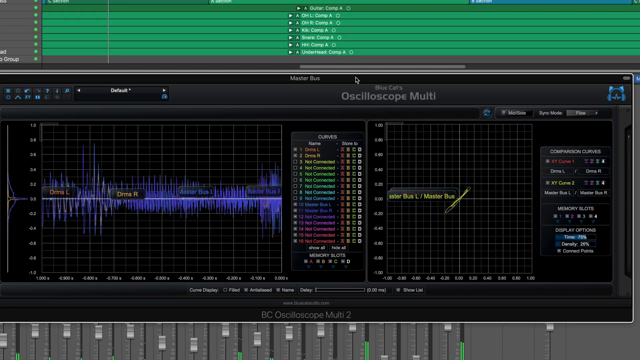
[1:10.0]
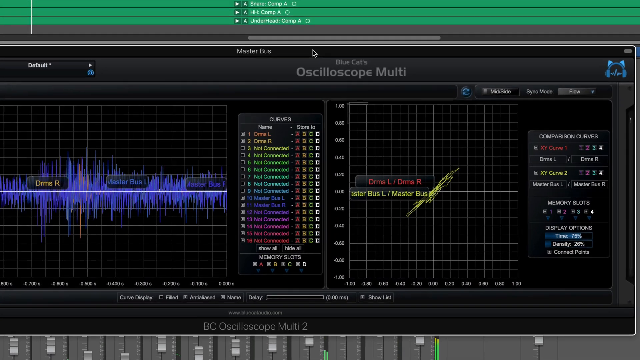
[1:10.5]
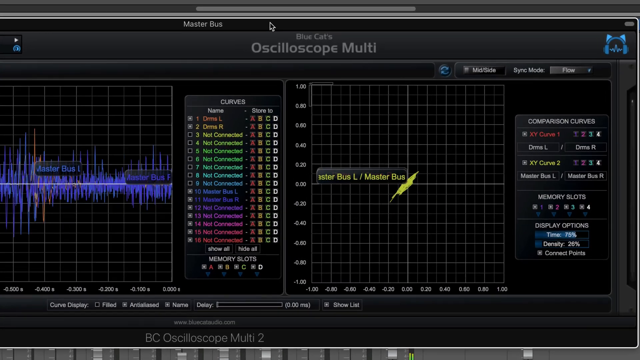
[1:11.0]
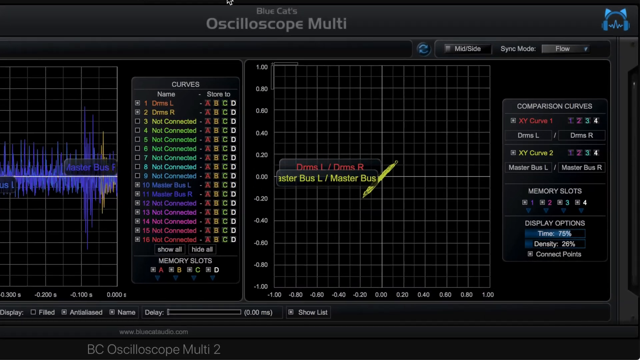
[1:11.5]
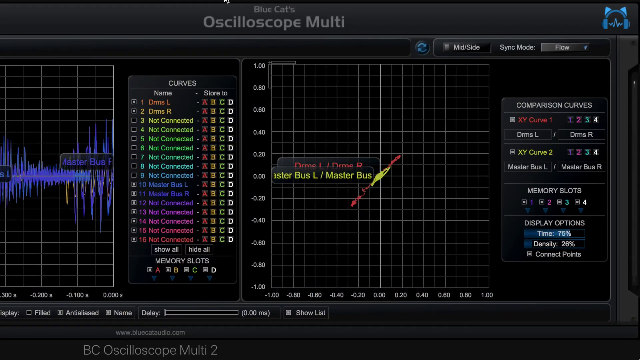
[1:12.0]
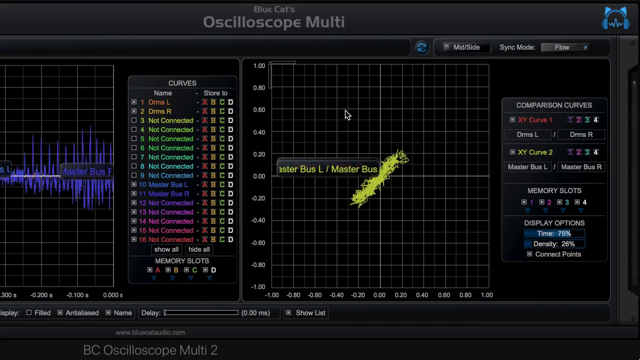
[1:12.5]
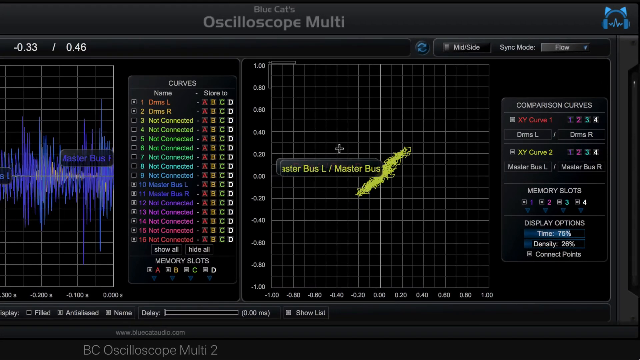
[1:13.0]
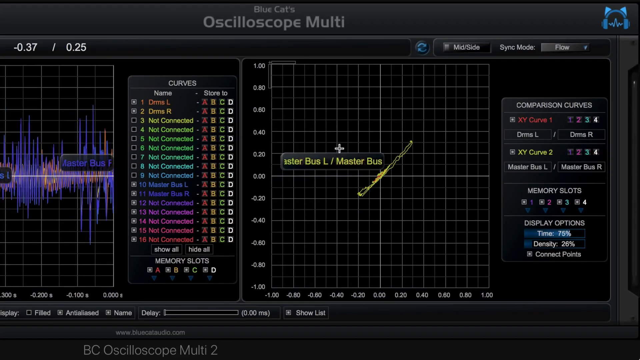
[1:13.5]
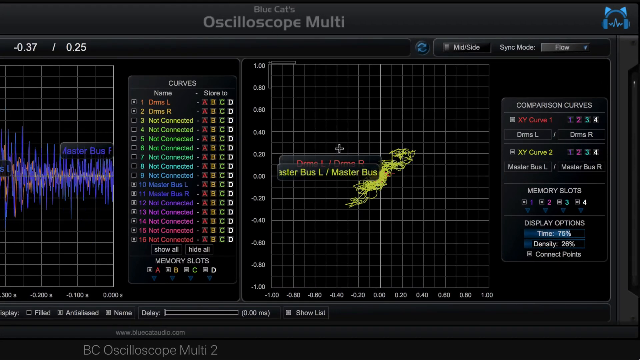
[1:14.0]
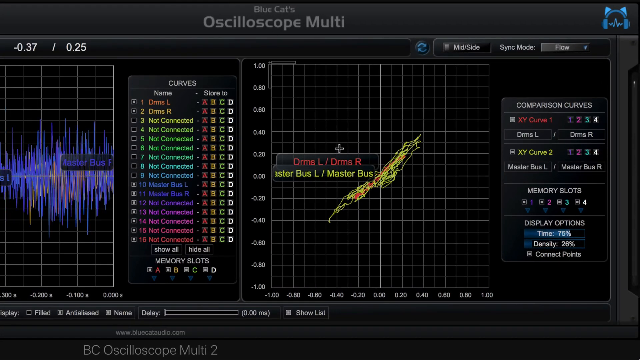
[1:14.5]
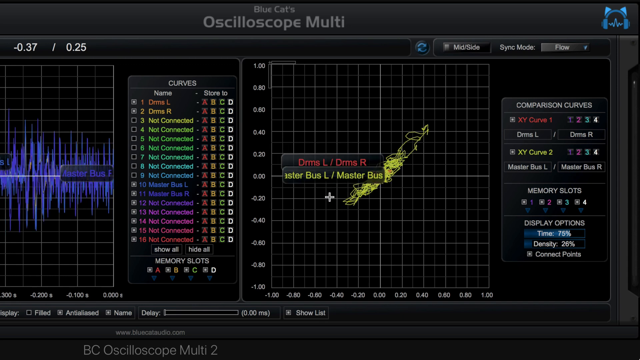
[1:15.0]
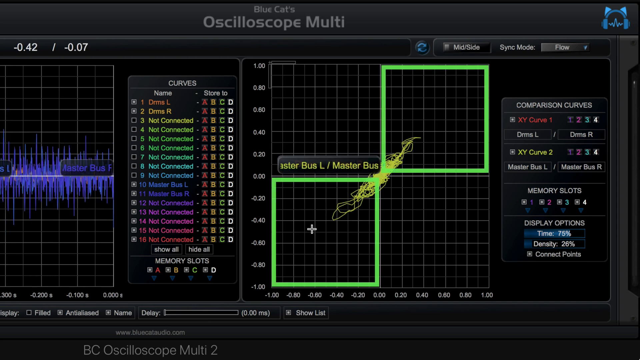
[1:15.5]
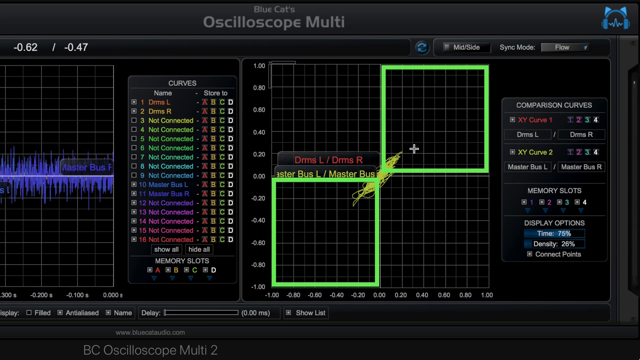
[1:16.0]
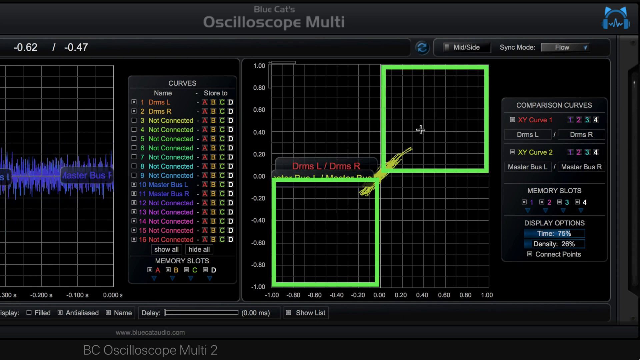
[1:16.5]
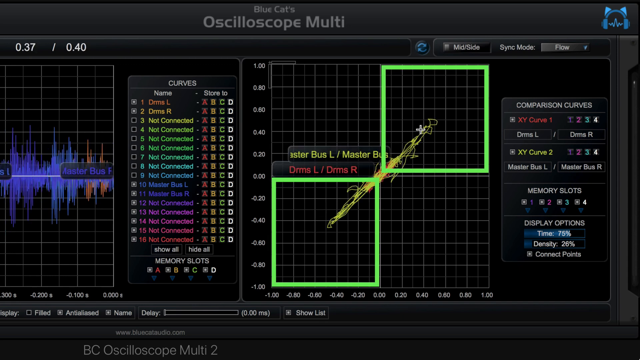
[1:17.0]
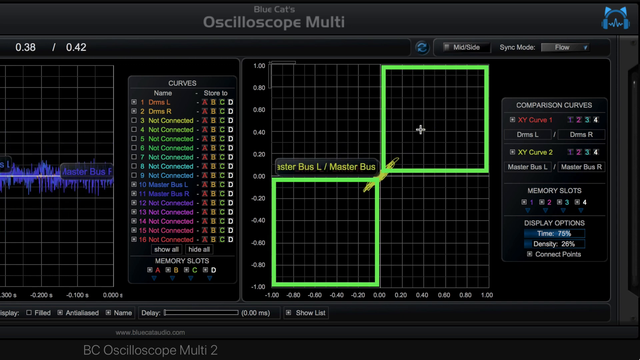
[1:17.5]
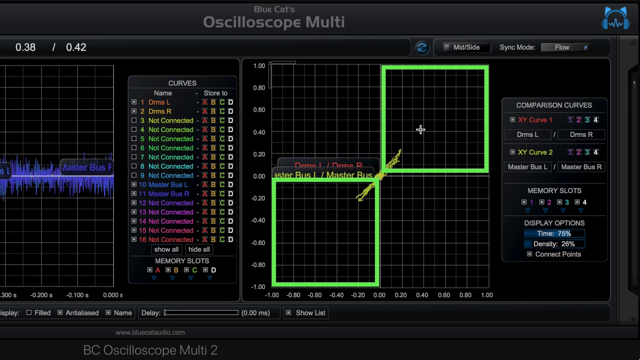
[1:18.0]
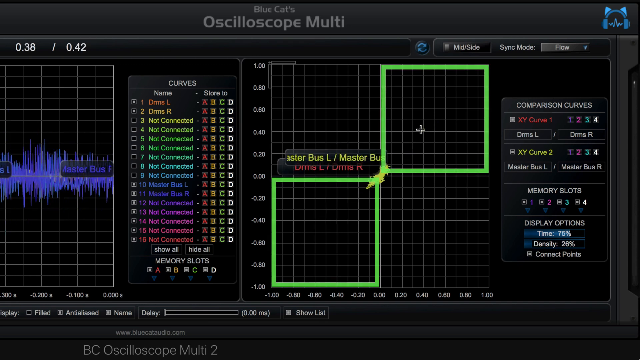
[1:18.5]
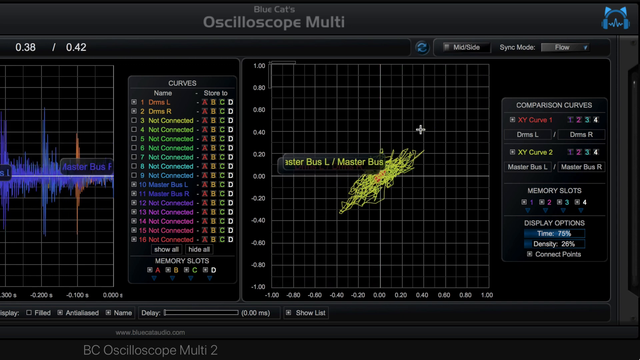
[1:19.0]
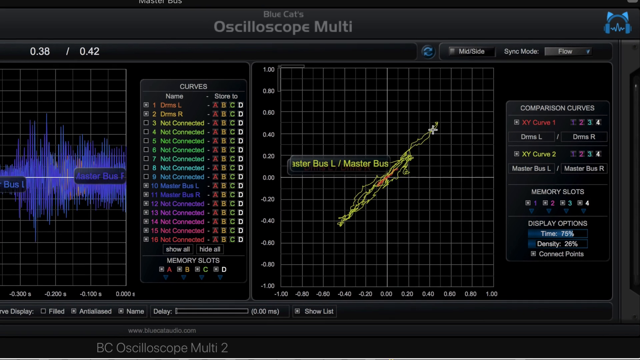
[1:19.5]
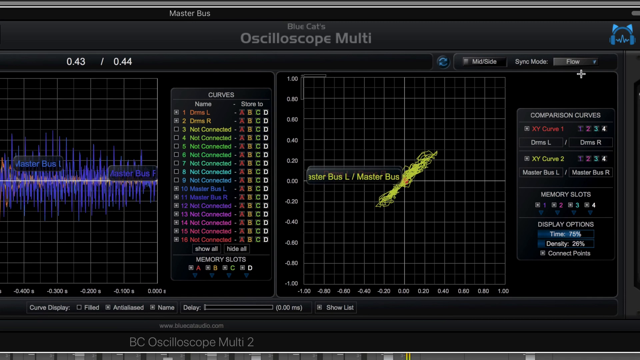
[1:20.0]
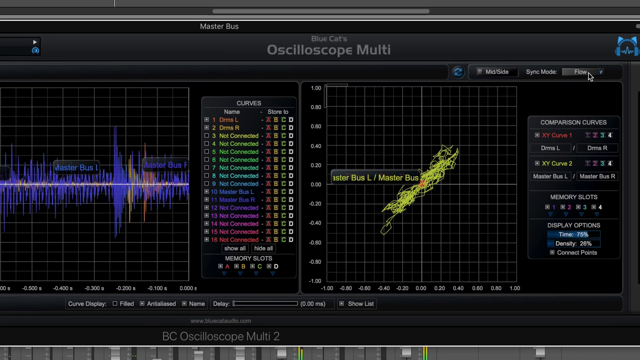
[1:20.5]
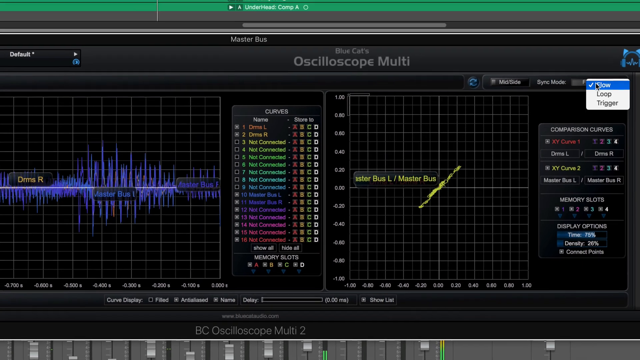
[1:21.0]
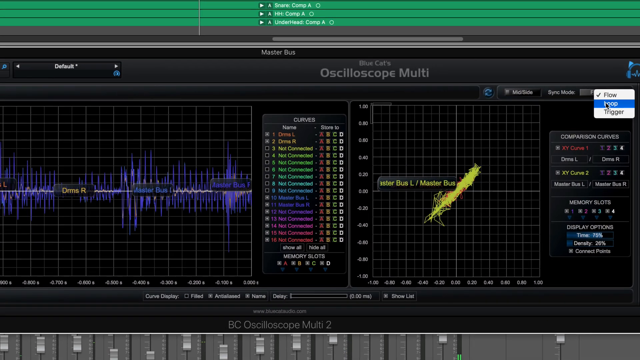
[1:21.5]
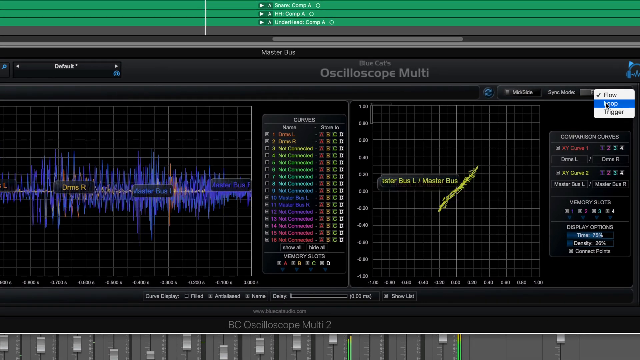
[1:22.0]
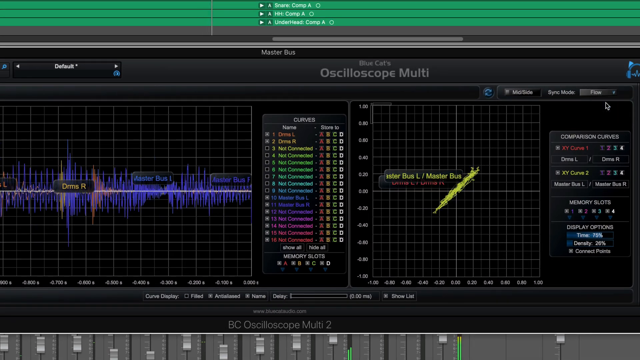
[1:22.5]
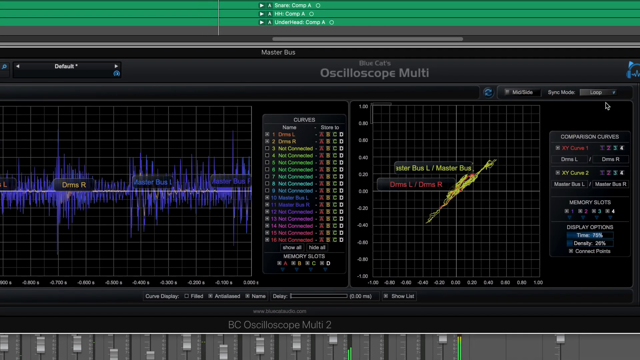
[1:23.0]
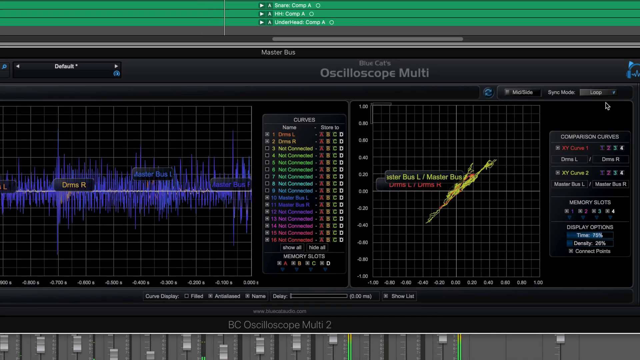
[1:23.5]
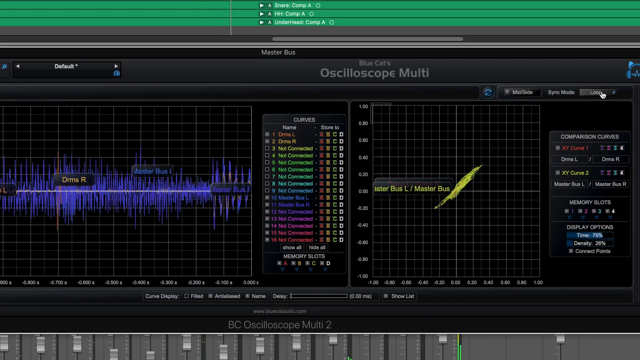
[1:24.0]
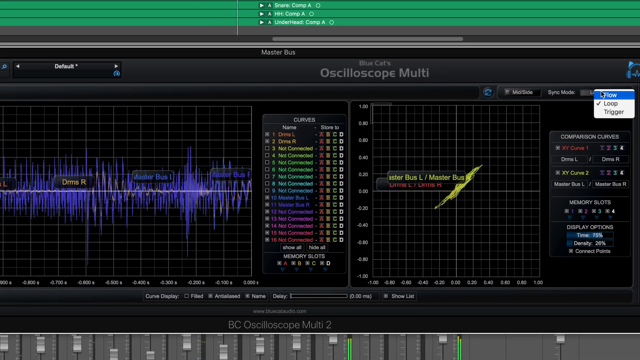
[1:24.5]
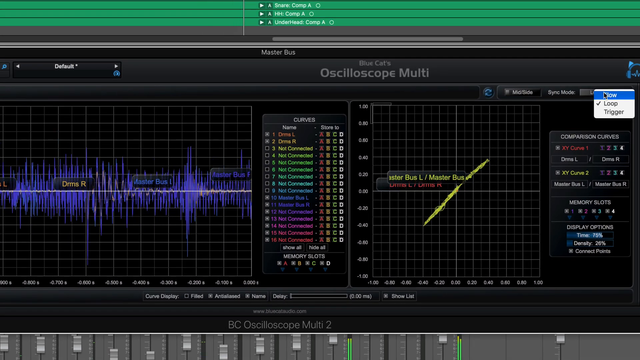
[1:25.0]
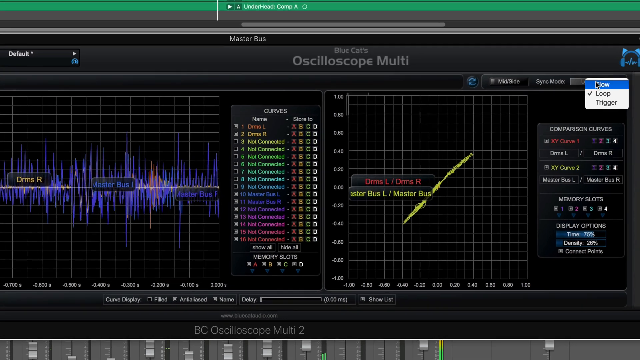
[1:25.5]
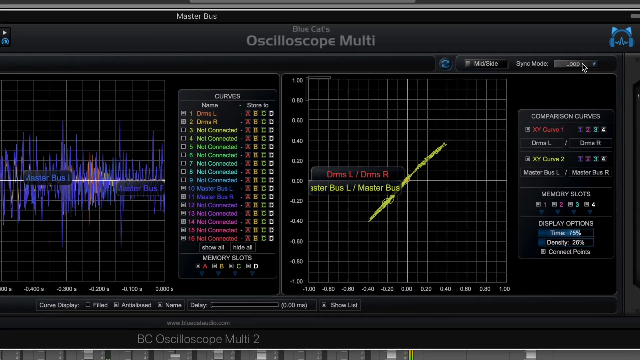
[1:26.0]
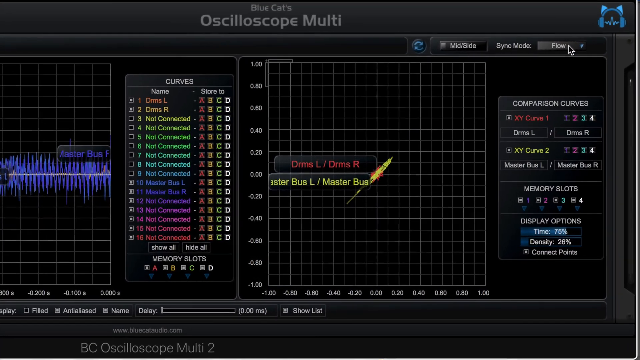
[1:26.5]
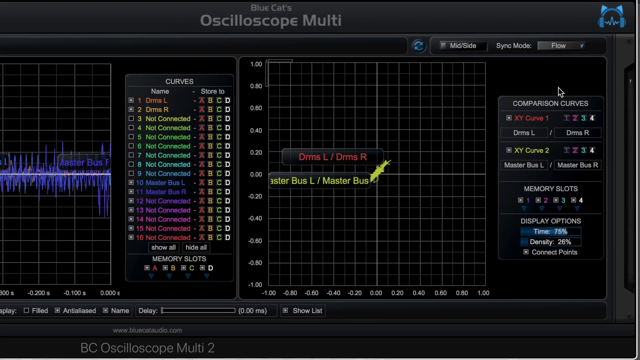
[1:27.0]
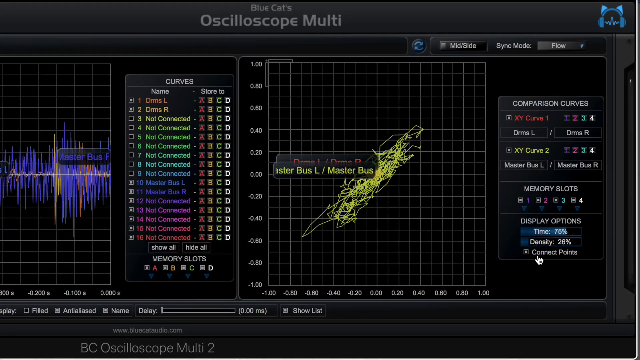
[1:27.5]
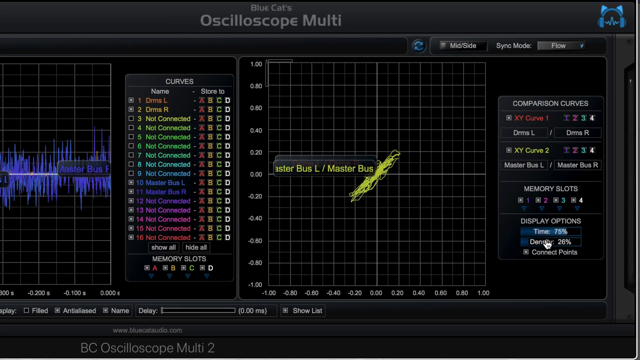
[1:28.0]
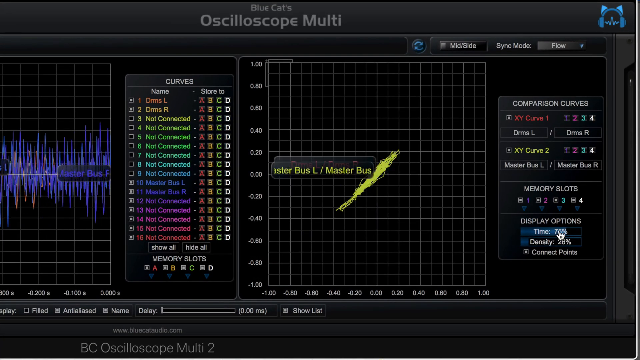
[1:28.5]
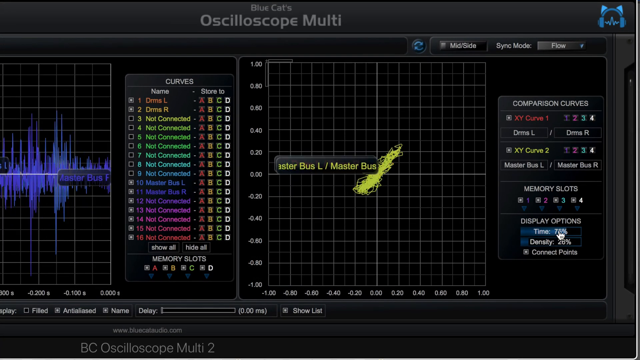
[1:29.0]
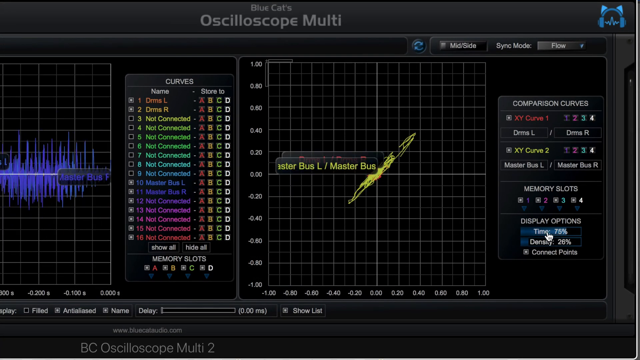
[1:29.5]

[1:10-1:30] The Oscilloscope Multi shows two different charts: one has purple frequency going all the way across, and the other has a small amount of yellow frequency right in the middle, bouncing up and down. Between the two is the colored chart, in orange, yellow, green, light blue, medium blue and purple, going into red. The whole top of the chart is green, with writing too small to read. Text reads "Oscilloscope Multi," and the bass and treble bounce around. Somebody clicks the mouse repeatedly on the top of a window whose text is unreadable, though it seems to say "time." The screen seems to be a combination of all the earlier ones, with most of it too small to see clearly. Labels include piano and guitar, and a list reading "guitar, drums, piano, bass, drum, RM," with the rest too small to read; it seems to involve recording music or some kind of musical activity. The colors include black and a deep burgundy-red, with a lot of gray and blue on the screen.